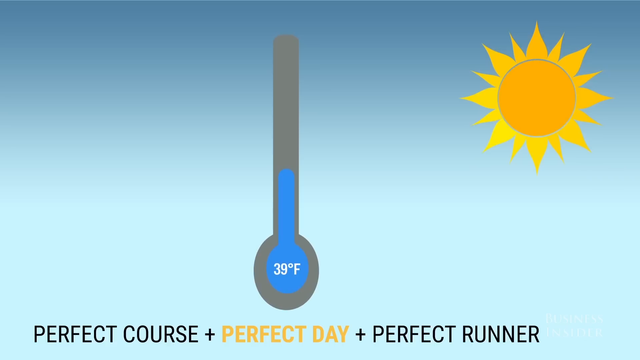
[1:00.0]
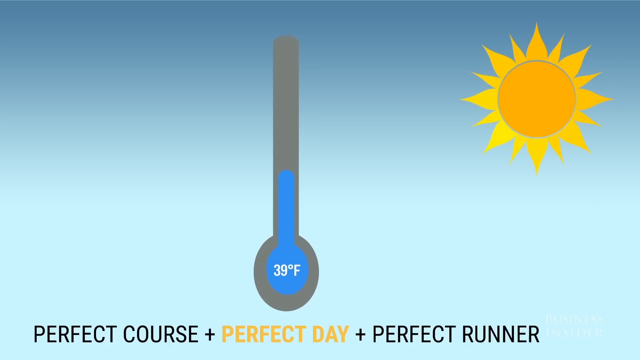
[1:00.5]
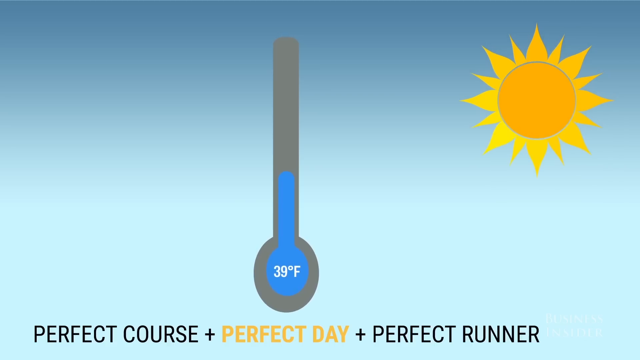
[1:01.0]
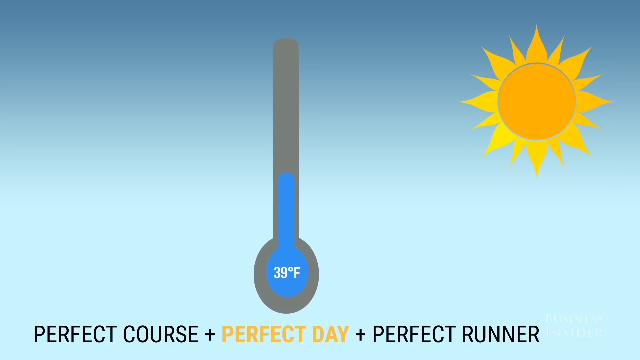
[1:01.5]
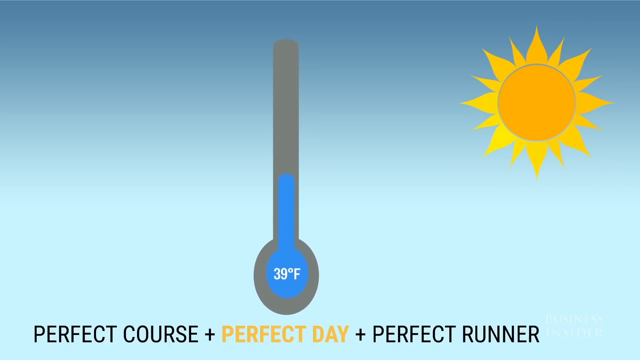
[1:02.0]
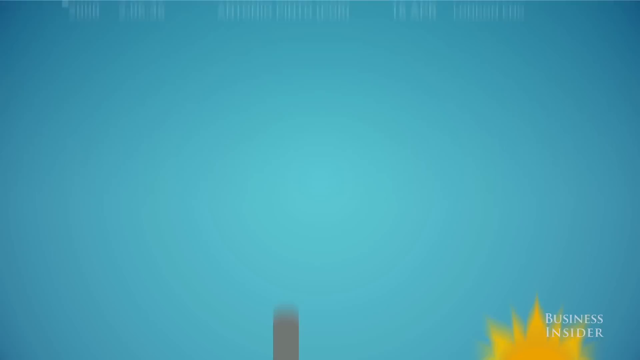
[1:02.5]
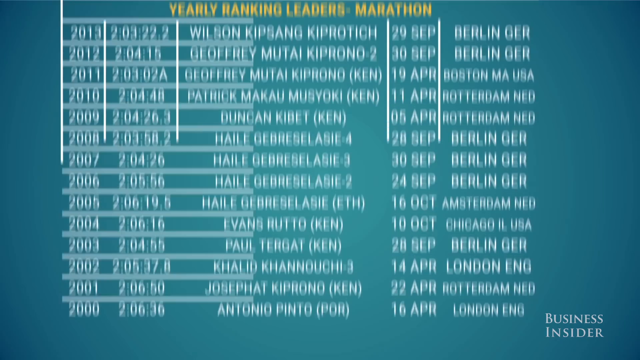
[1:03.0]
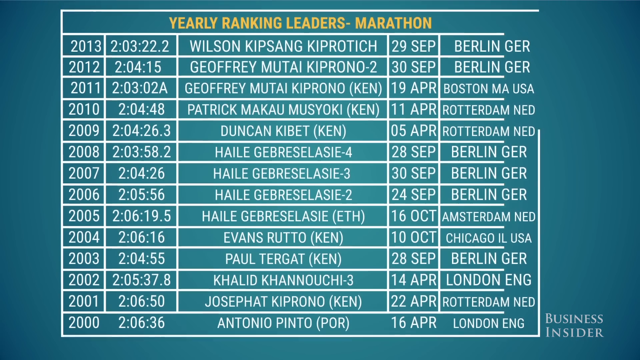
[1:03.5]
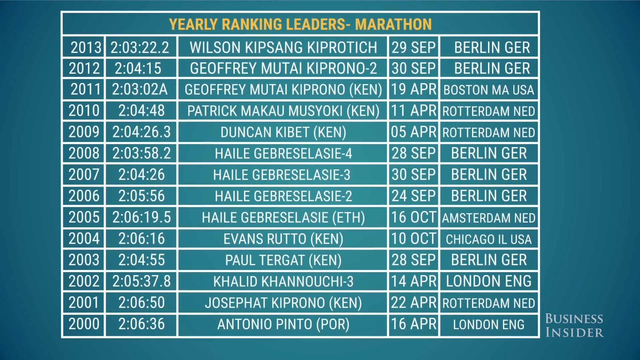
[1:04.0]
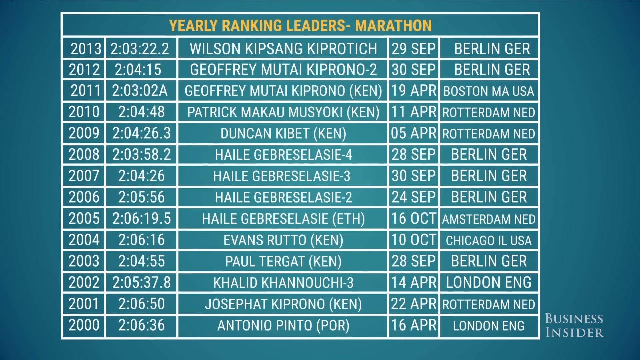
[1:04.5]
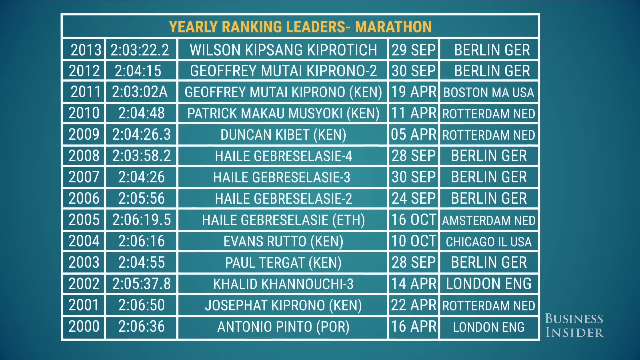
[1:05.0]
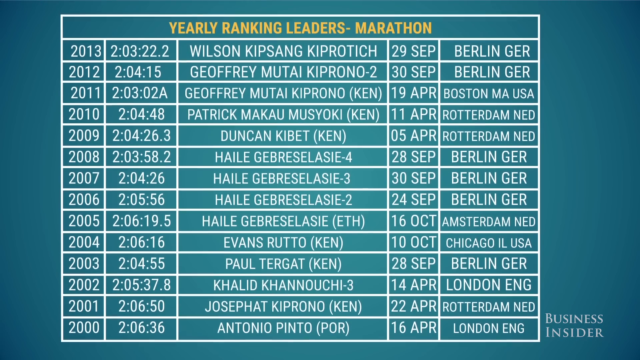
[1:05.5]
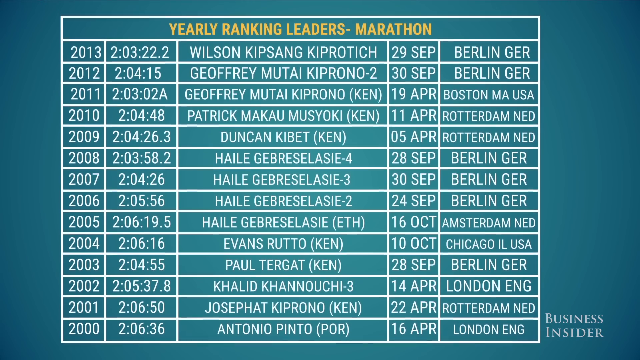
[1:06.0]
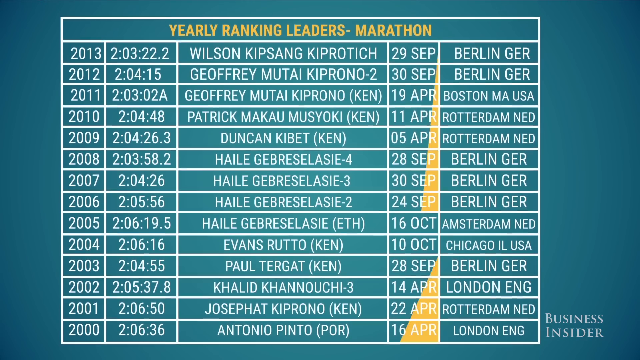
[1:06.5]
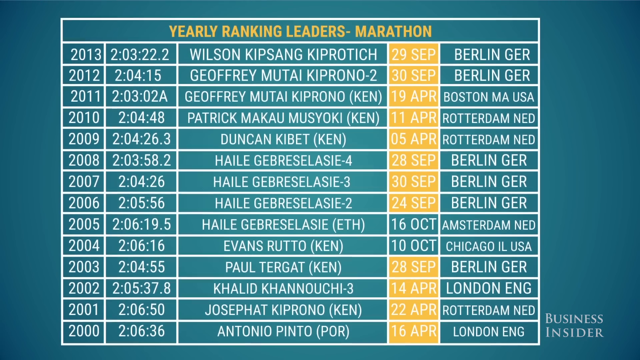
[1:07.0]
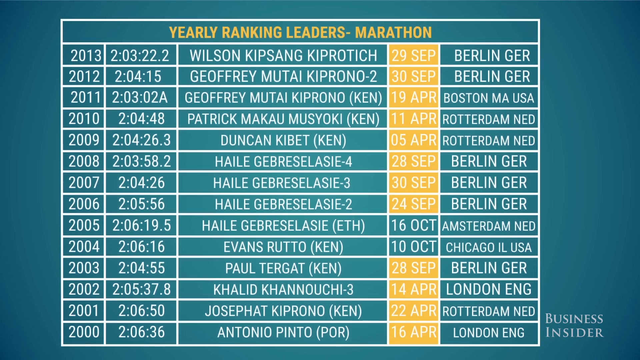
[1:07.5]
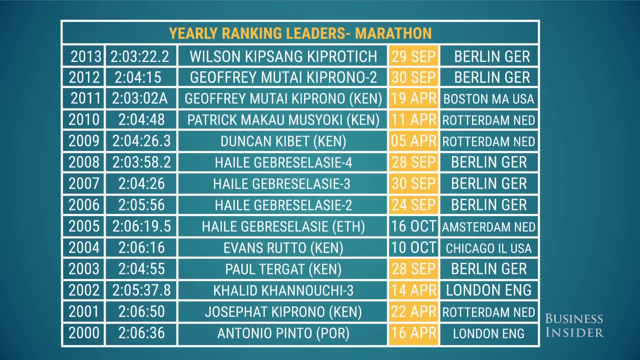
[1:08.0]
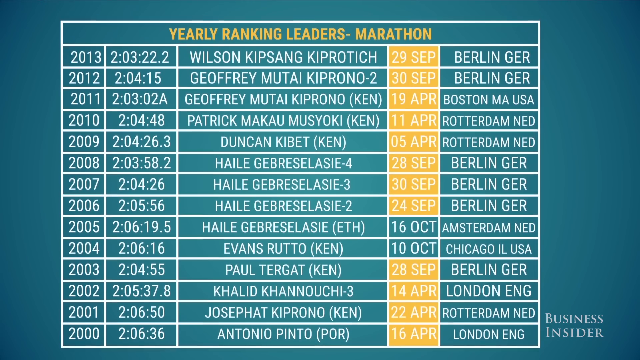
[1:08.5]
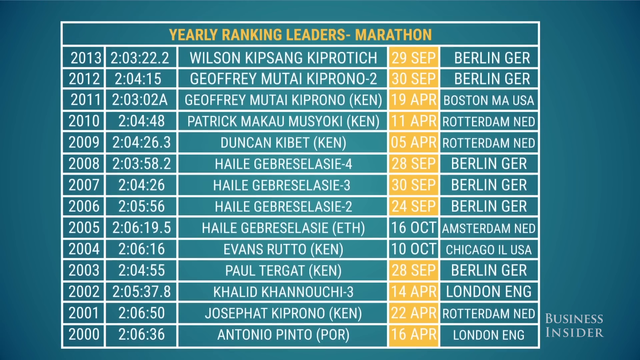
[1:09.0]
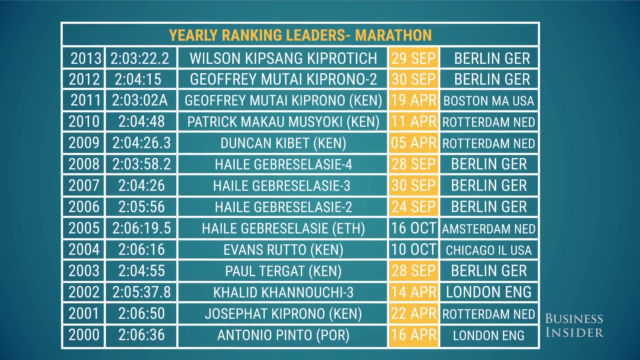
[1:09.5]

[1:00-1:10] A picture of the sun appears on a blue background, with a thermometer showing 39 degrees Fahrenheit at the bottom of the screen. Text reads "perfect course. perfect day. perfect runner." A list titled "yearly ranking leaders marathon" follows, with Berlin, Germany appearing as the marathon with the best times. The best time, from 2013, is 2 hours, 3 minutes and 22.2 seconds. Most of the dates seem to be in September, along with April.